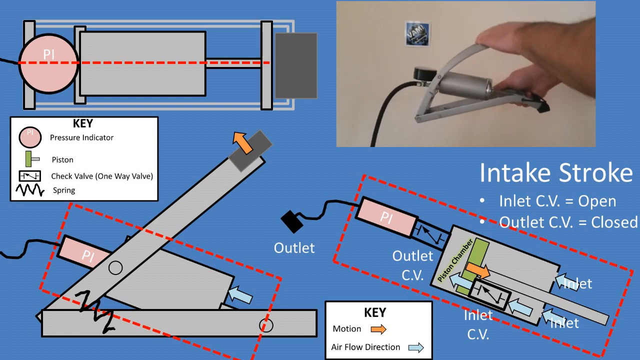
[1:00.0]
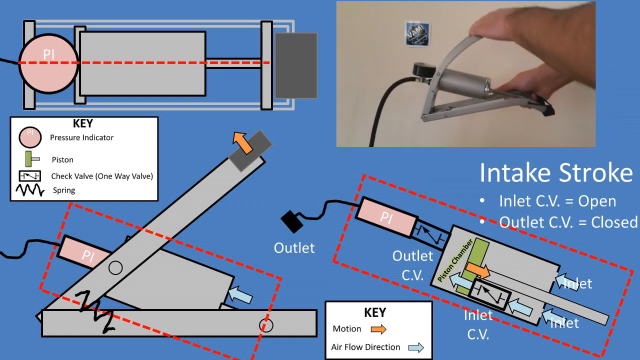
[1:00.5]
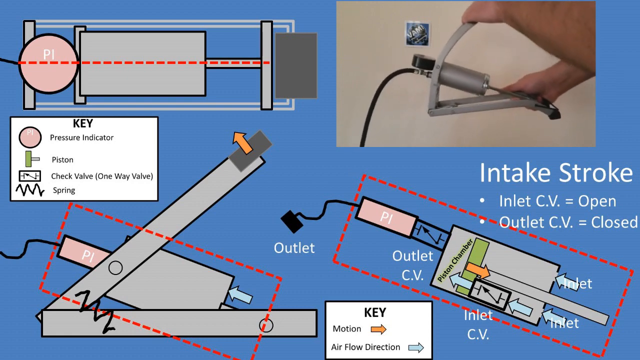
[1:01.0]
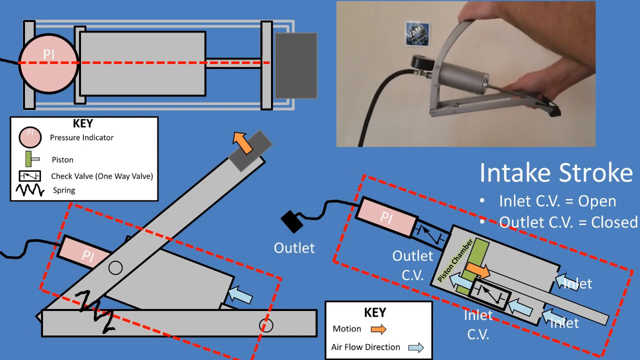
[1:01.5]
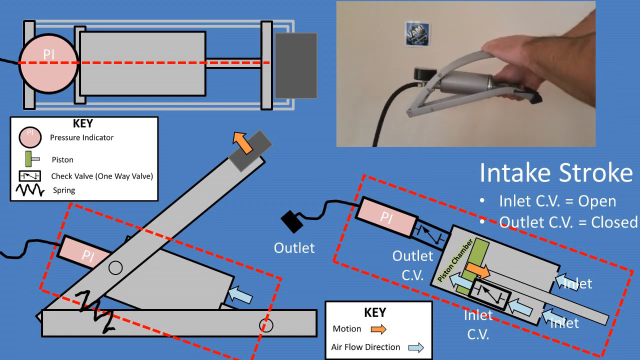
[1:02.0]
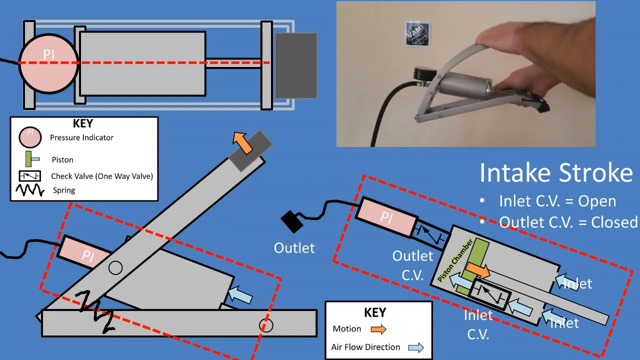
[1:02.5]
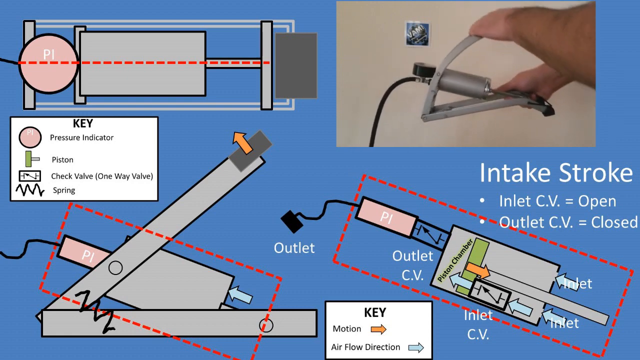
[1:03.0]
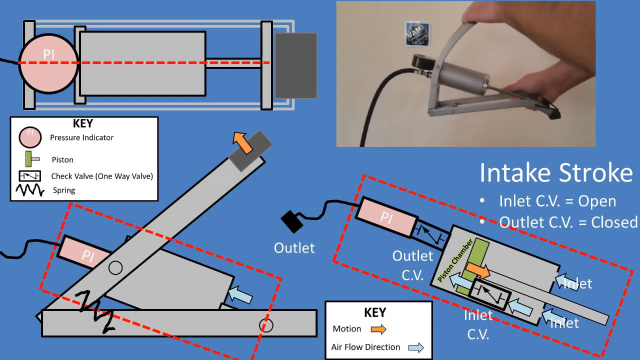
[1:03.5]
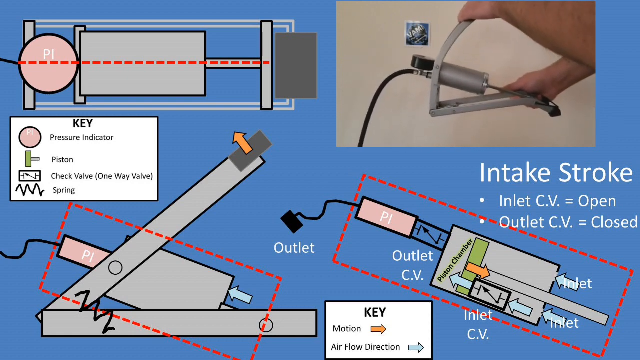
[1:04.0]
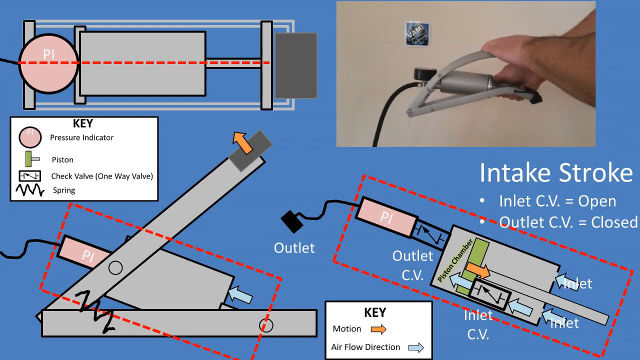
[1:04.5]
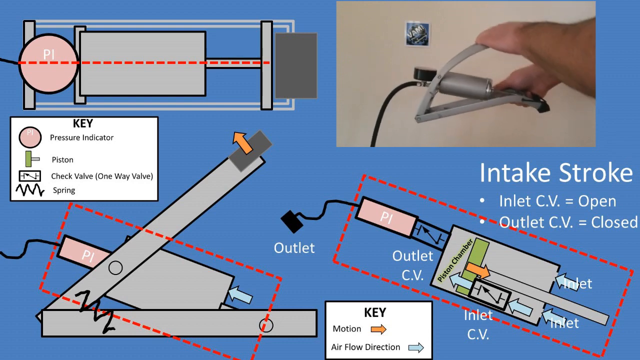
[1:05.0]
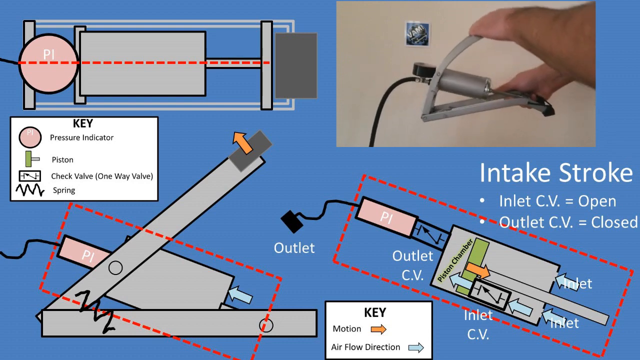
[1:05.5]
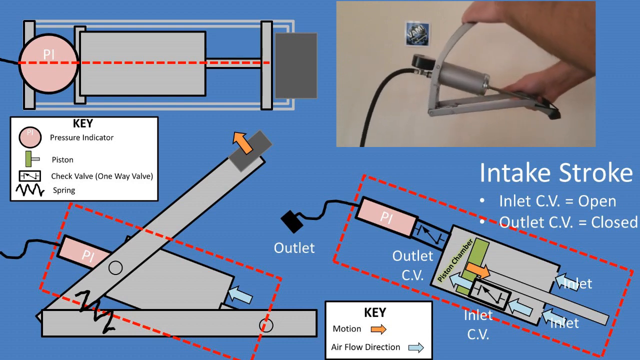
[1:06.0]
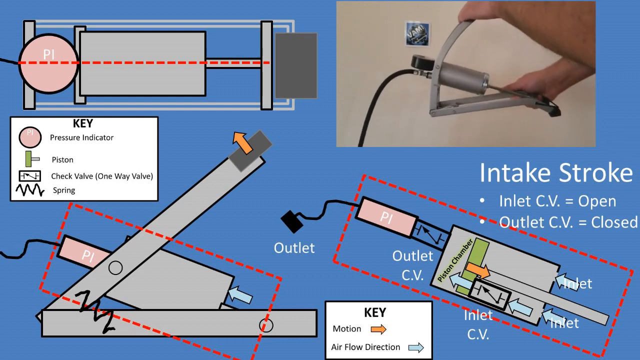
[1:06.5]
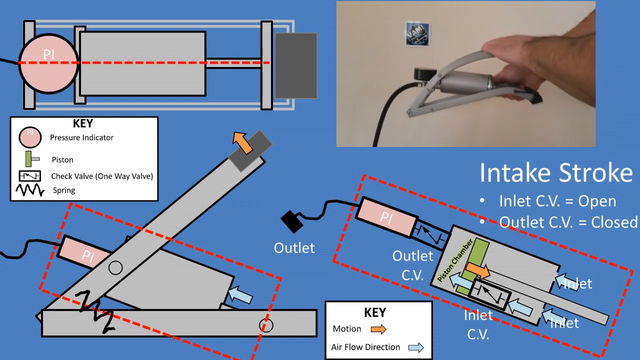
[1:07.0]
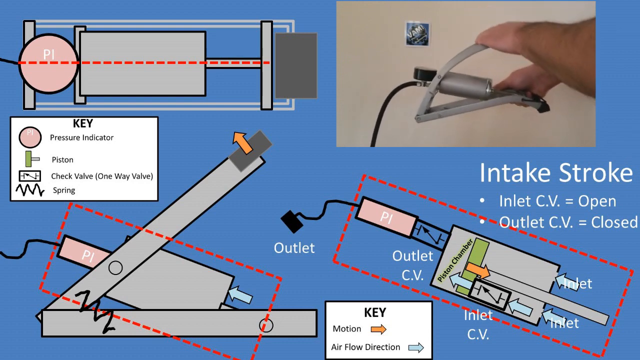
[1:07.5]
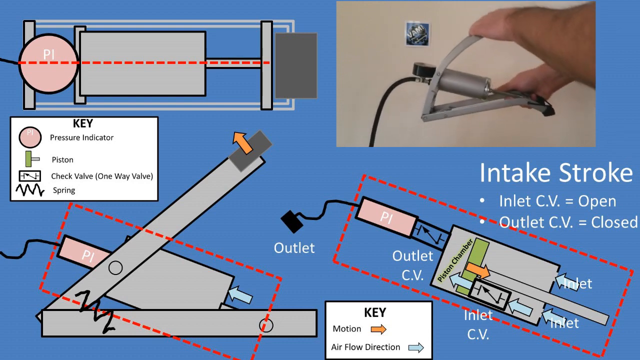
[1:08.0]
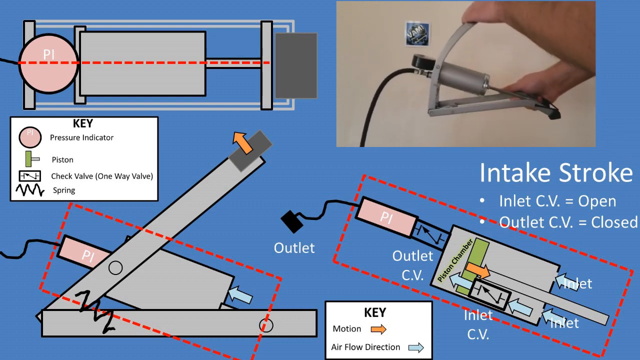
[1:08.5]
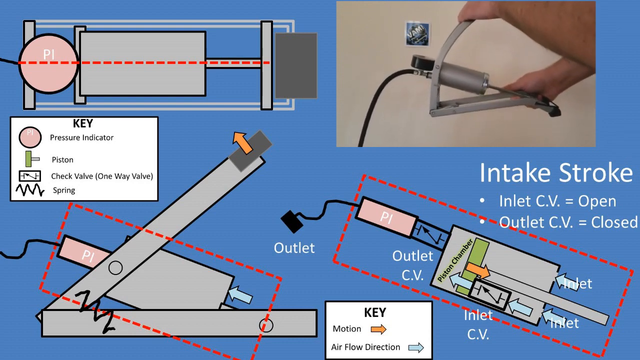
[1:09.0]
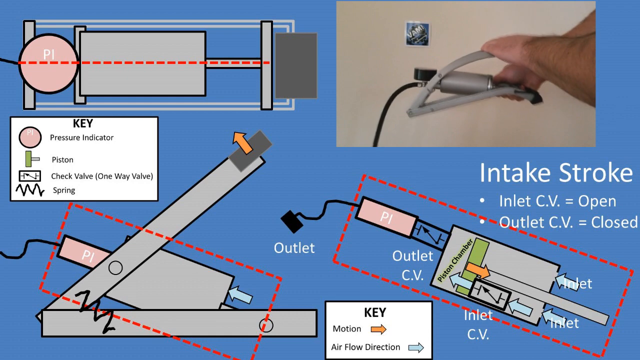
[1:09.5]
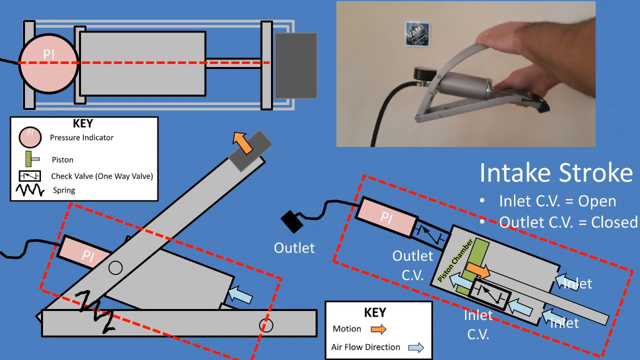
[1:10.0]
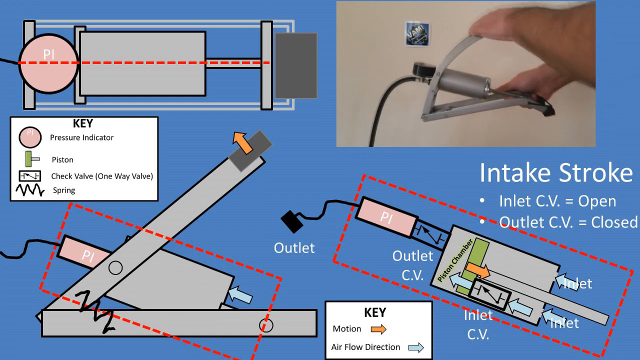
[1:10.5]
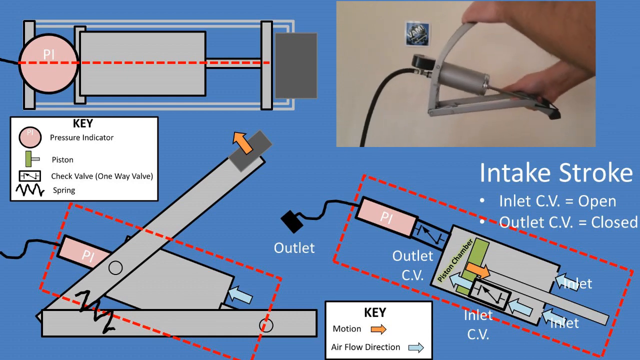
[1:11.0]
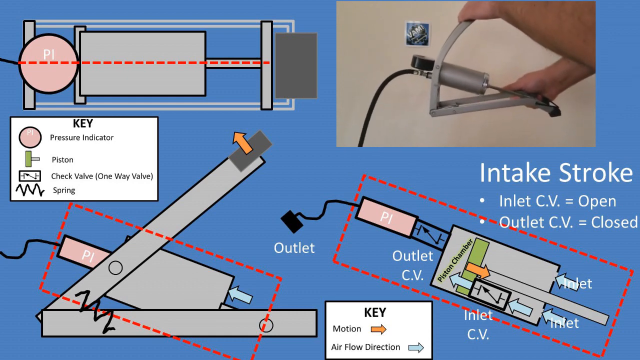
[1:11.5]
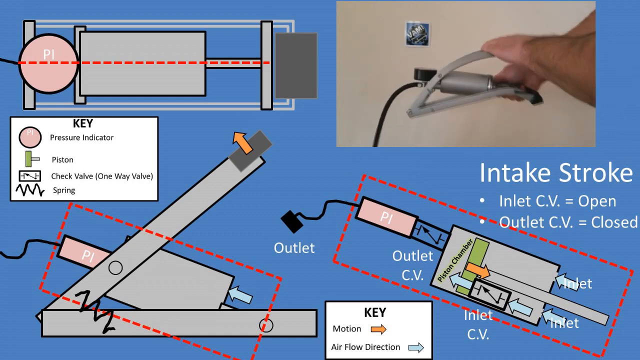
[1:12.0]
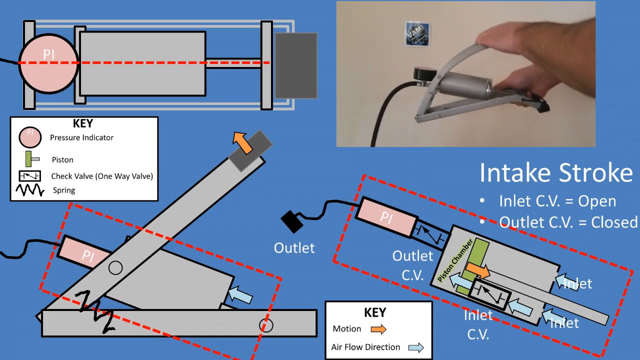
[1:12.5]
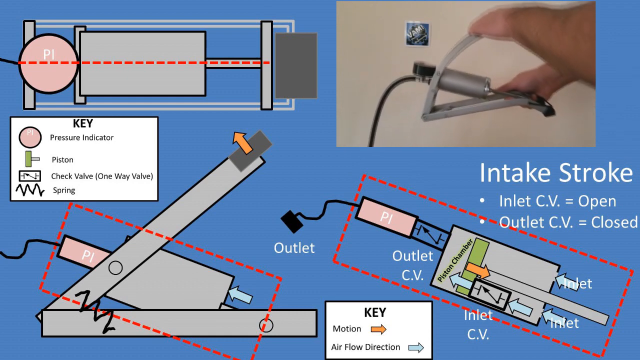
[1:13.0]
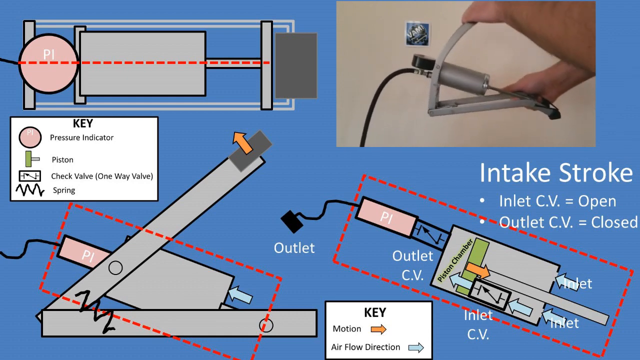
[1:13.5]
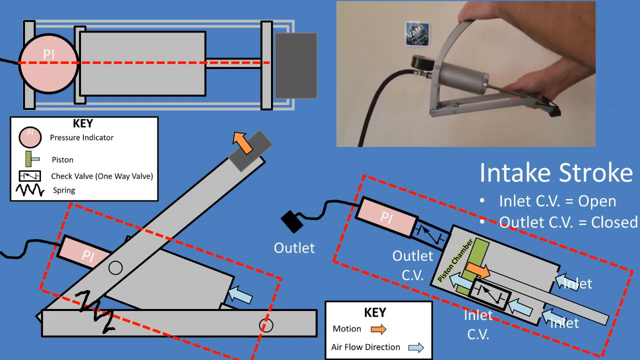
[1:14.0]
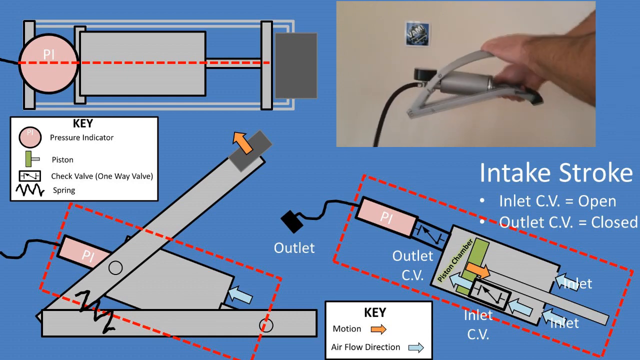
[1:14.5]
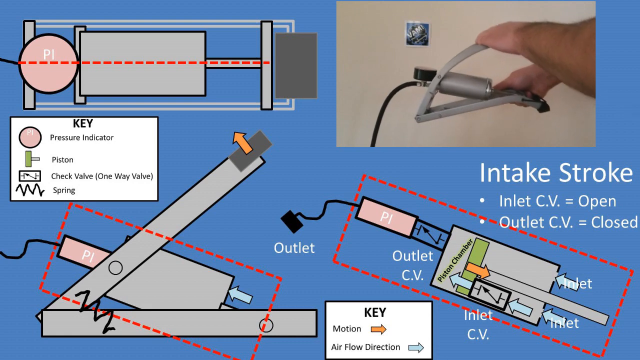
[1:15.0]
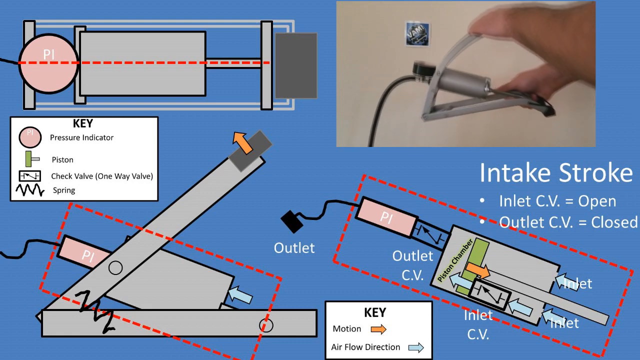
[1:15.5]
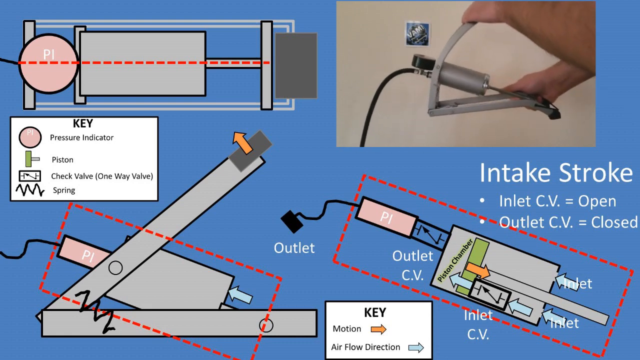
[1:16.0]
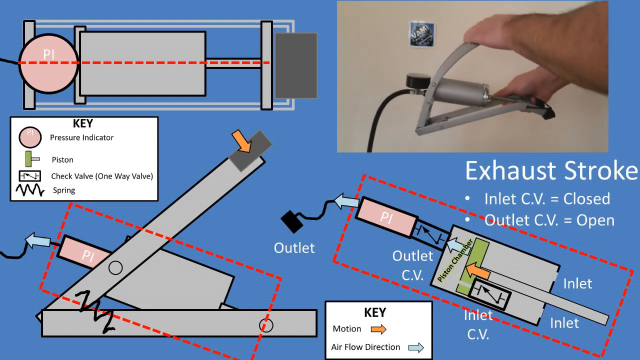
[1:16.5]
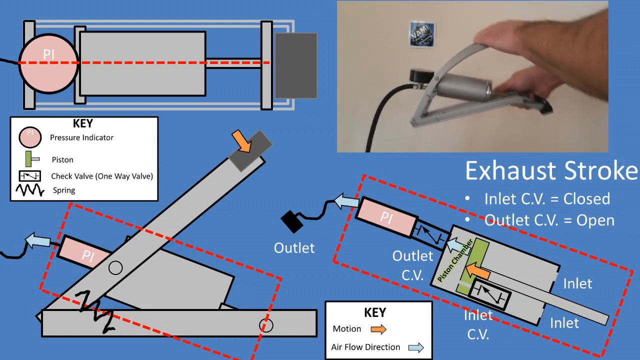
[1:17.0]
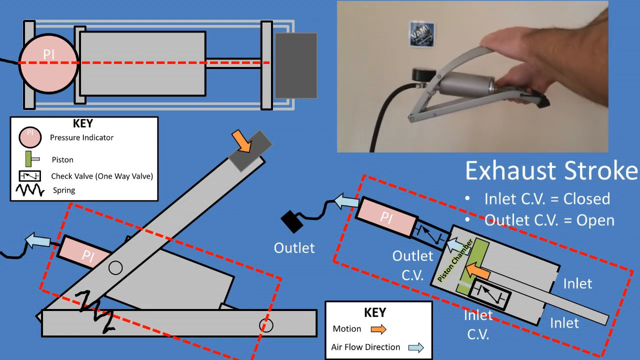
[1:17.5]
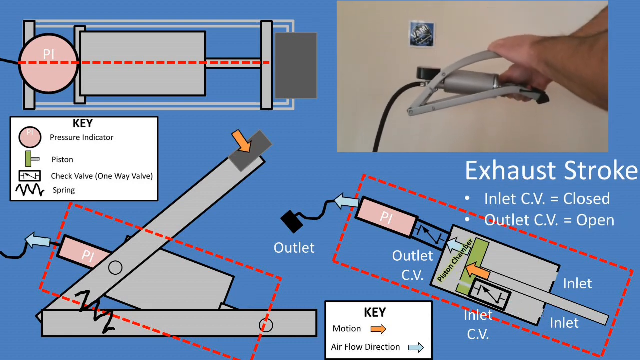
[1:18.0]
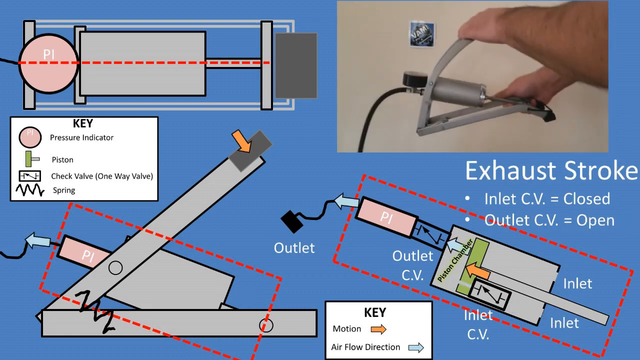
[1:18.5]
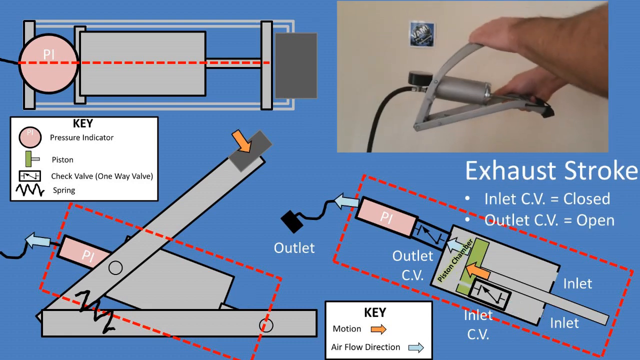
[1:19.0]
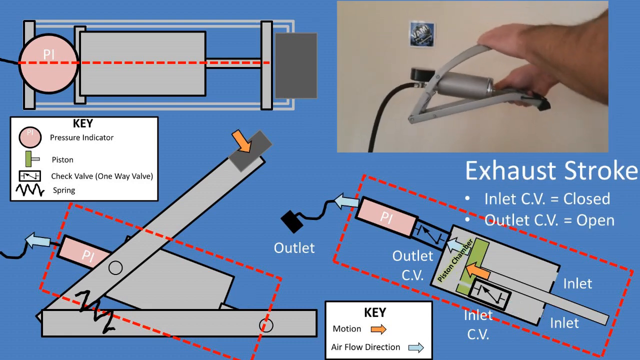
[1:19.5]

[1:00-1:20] In the upper right of the screen, the same video shows a person's forearms and hands opening and closing the device, pulling the two levers closed, which moves the piston in the middle portion of the device. Meanwhile two arrows appear on the lower right diagram on the piston chamber: an orange one pointing to the lower right and a blue one pointing to the upper left. The middle section of the piston moves back and forth. According to the key, the orange arrow indicates motion and the blue arrow indicates airflow direction, so the two point in opposite directions.